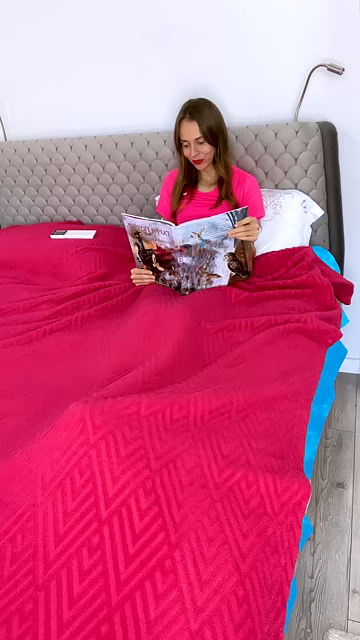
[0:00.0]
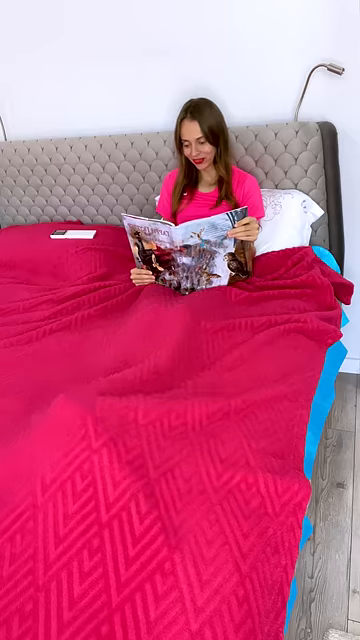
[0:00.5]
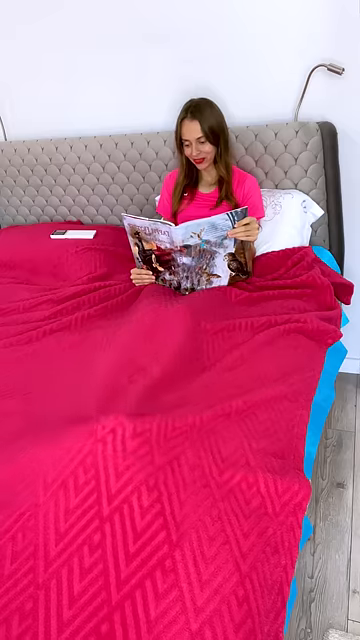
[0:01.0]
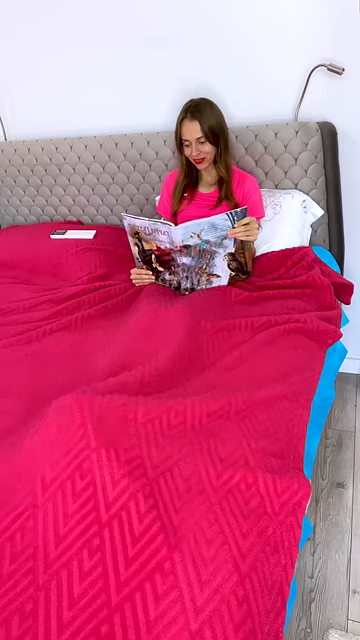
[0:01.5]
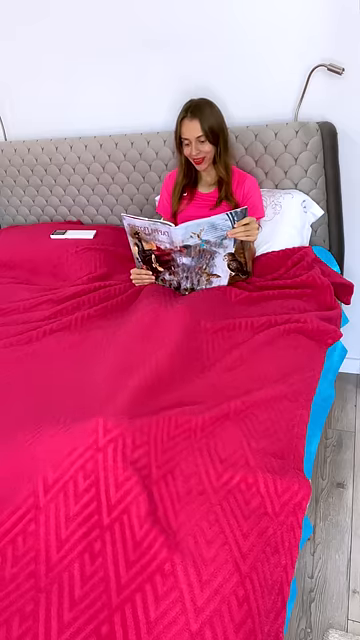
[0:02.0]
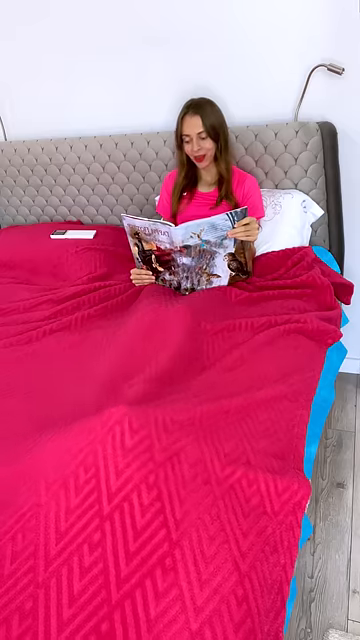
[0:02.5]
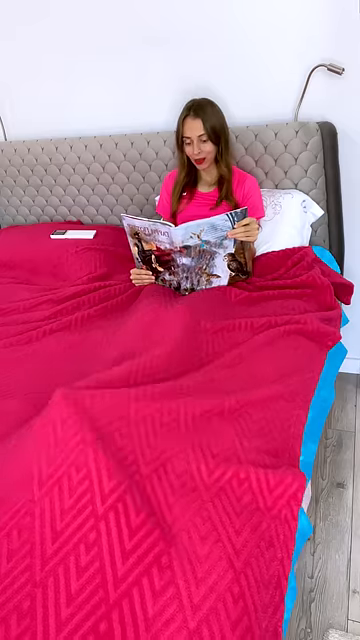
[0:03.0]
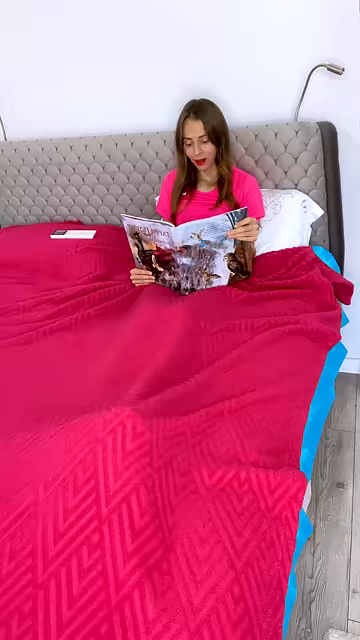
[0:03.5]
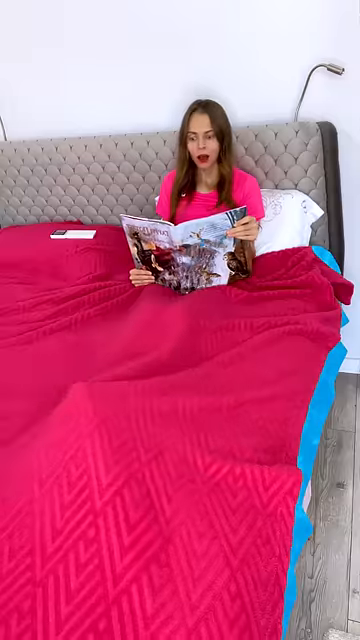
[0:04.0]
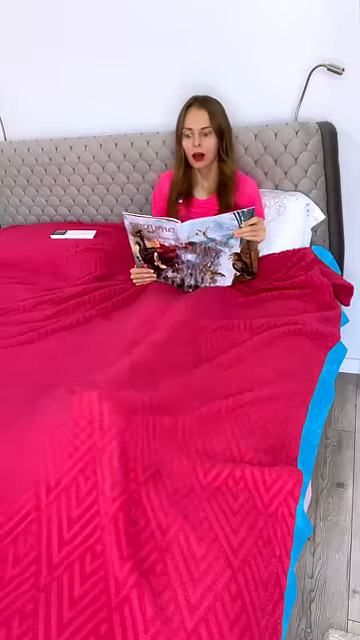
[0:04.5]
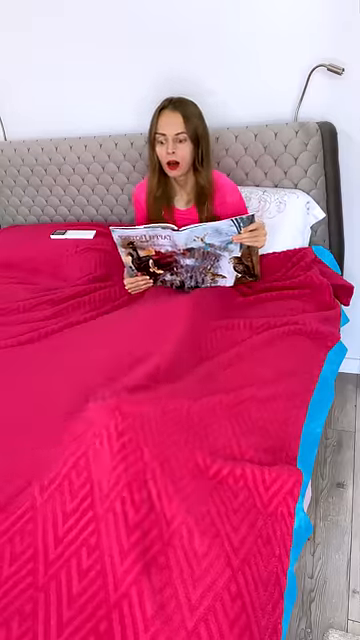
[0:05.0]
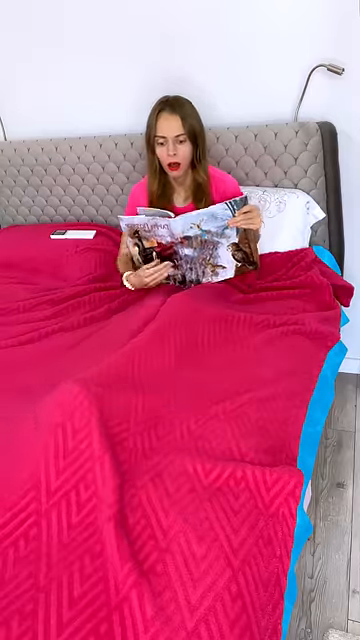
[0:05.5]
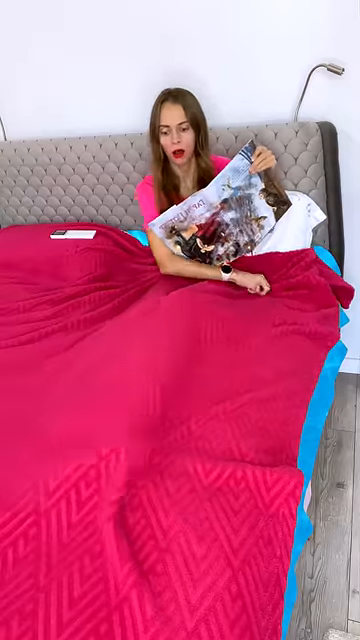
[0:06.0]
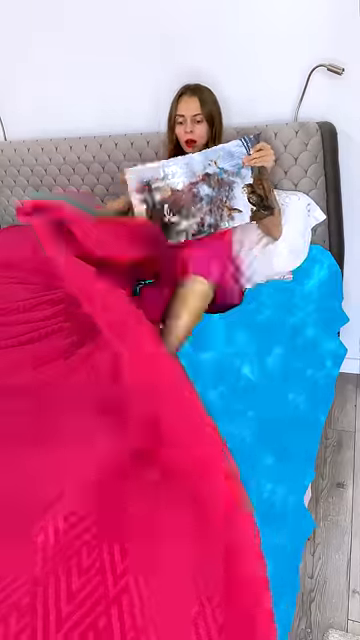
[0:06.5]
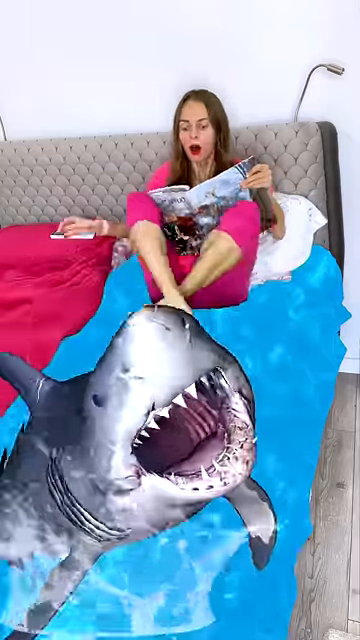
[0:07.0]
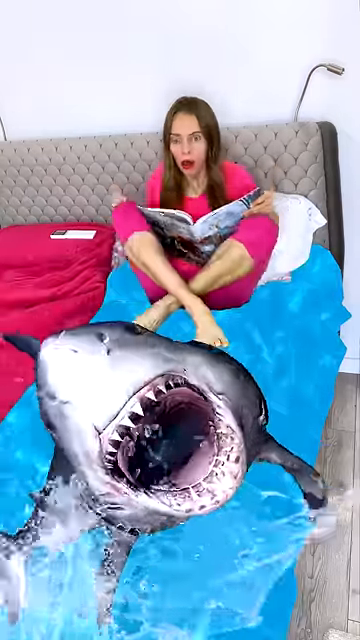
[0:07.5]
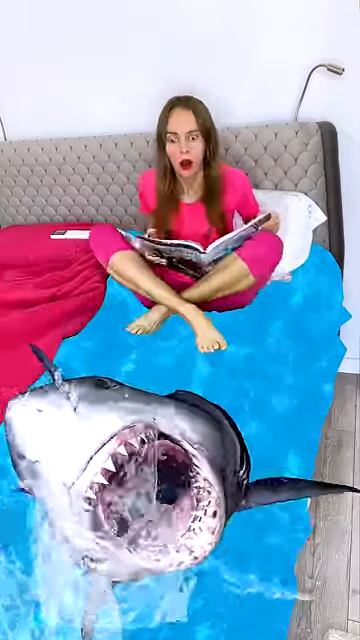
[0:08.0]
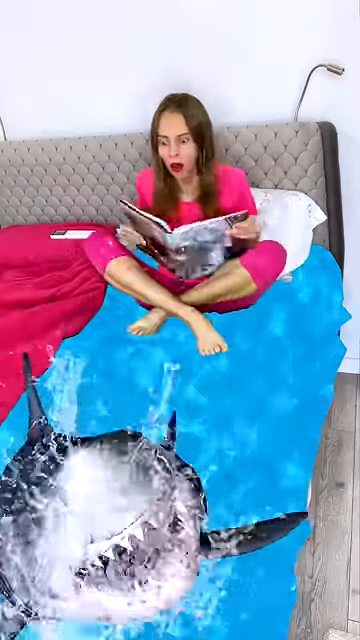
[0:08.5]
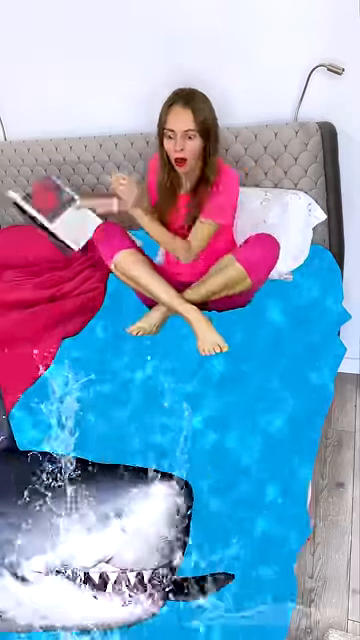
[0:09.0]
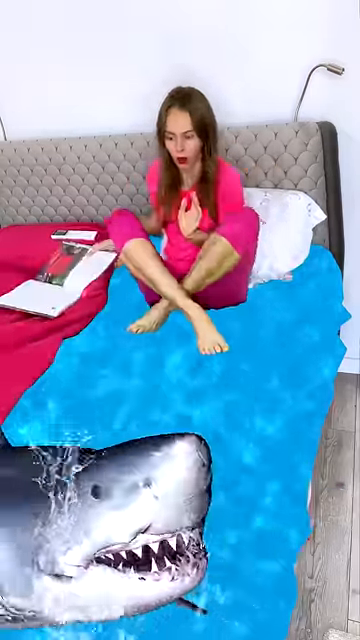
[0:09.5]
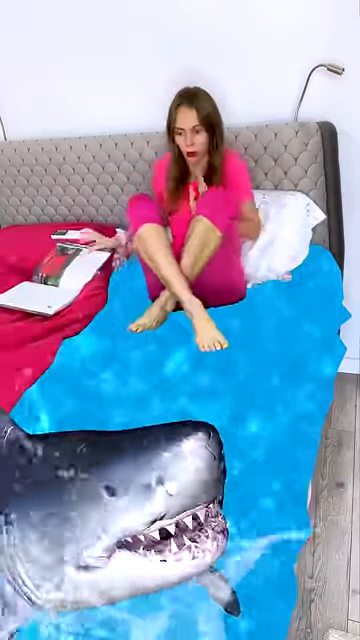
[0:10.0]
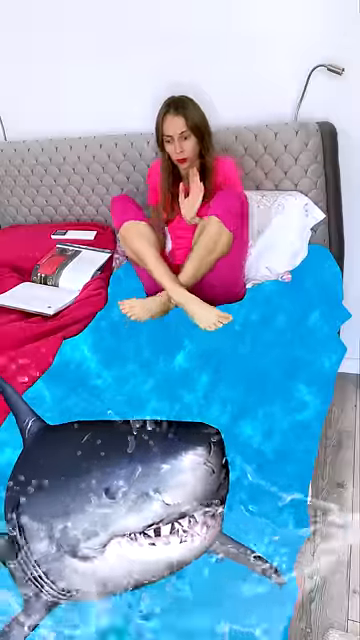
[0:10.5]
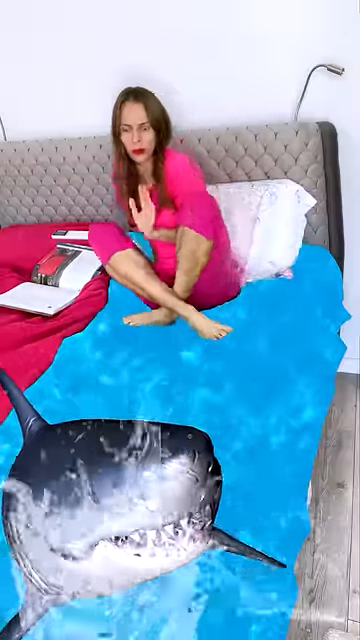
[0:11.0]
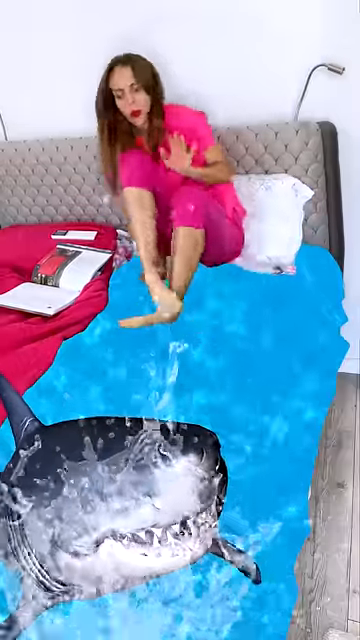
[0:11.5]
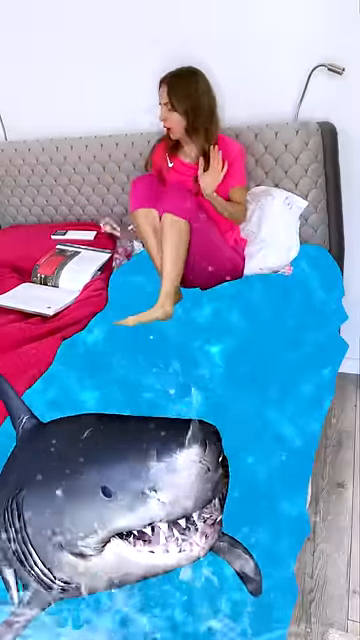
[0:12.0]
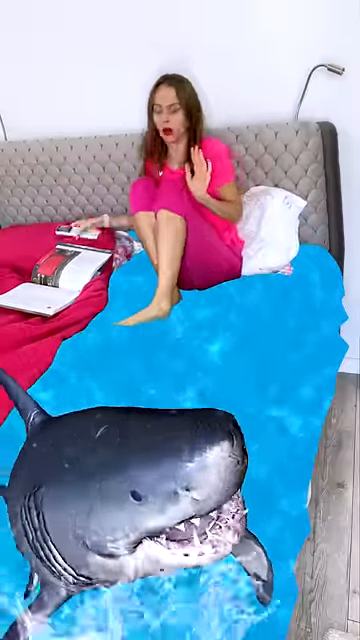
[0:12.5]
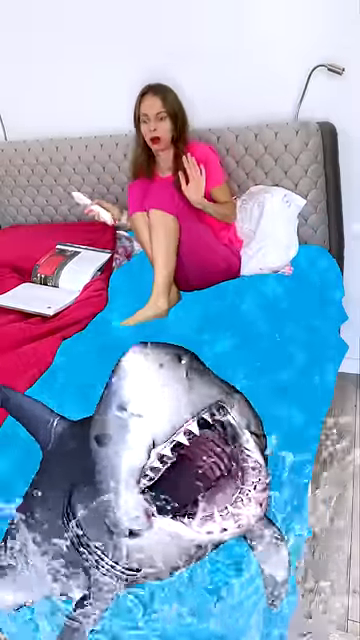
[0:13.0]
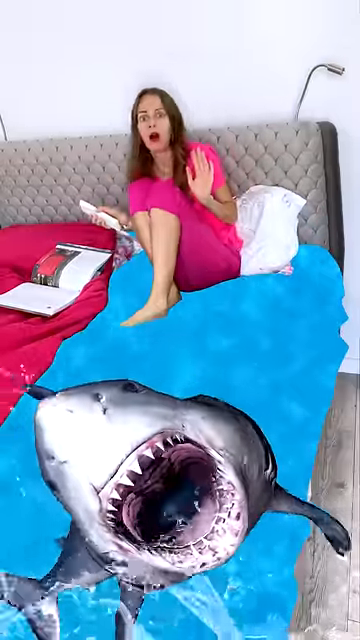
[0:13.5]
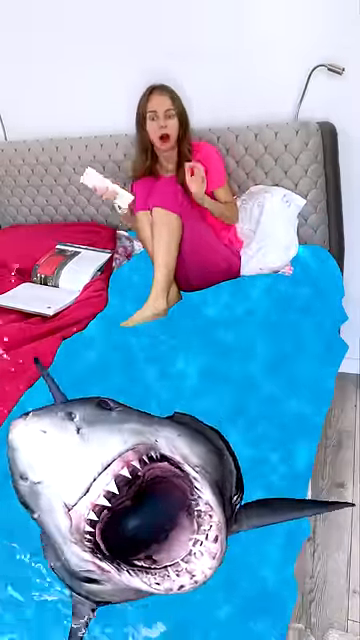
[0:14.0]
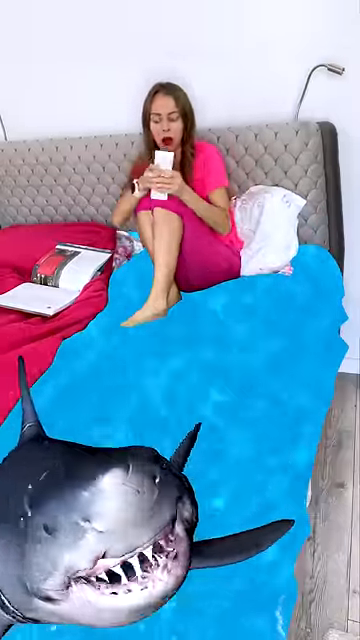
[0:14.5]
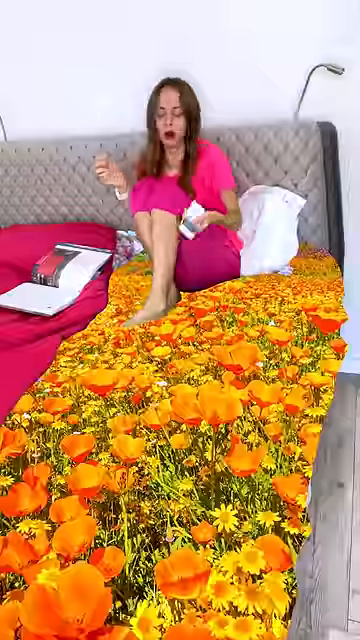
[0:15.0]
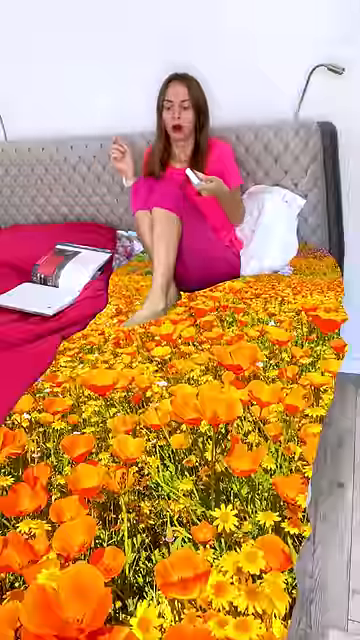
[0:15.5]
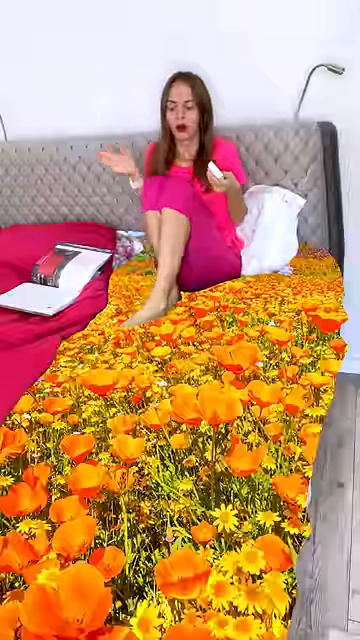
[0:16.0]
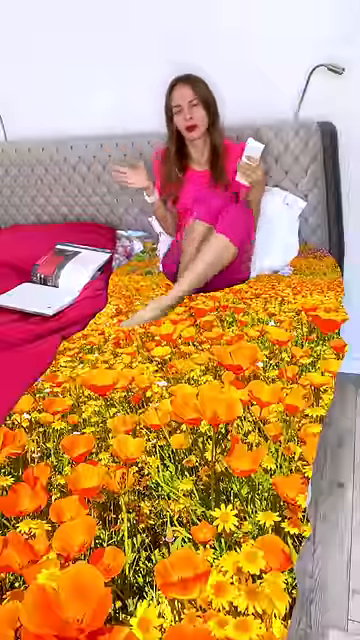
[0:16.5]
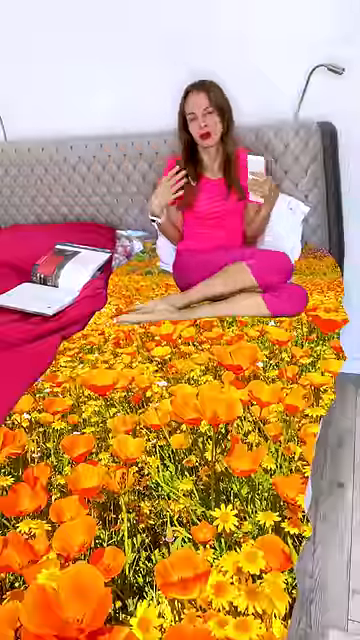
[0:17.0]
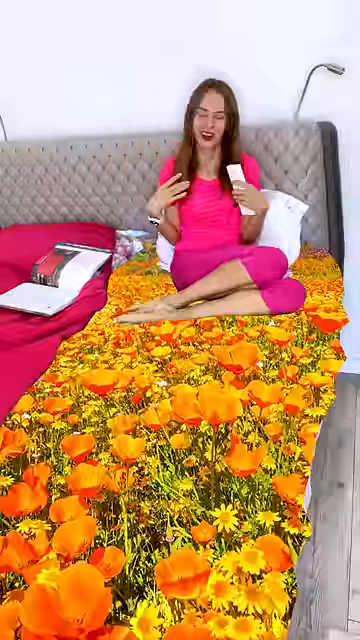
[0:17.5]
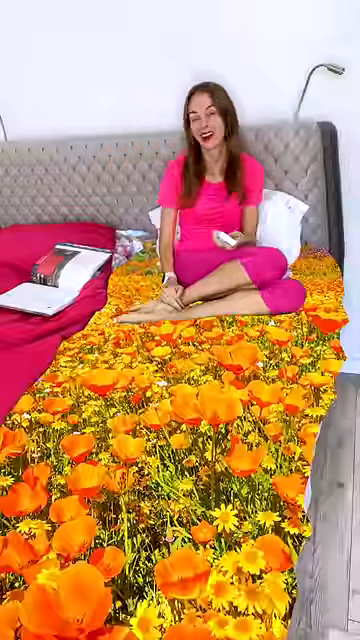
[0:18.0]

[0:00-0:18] A woman sits in her bed under a blanket, reading a magazine. She is fully clothed and has long dark brown hair, and she is laying on a pillow as she sits in the bed. Under the cover at her feet, the bed is moving. When she lifts the cover up, she is sitting Indian style, and her sheets turn out to be made of the ocean: the blue water is visible, with a picture of a shark opening its teeth in her bed. After the ocean shot, the bed is full of flowers, showing a field of orange and yellow flowers. The woman changes the screen from the ocean to the field of flowers using a remote in her left hand.